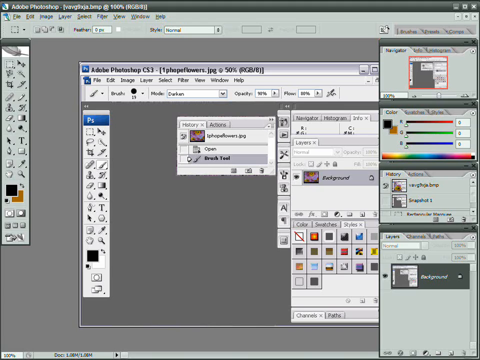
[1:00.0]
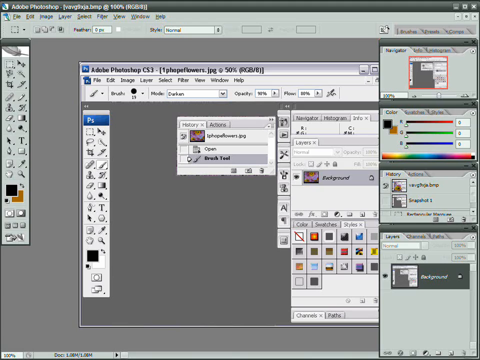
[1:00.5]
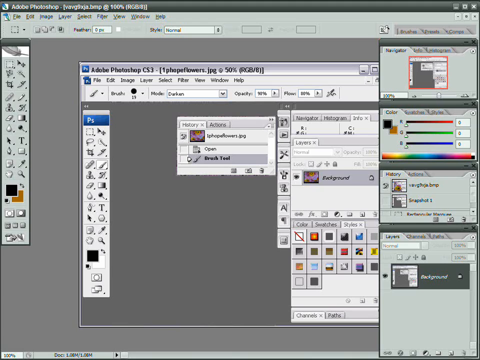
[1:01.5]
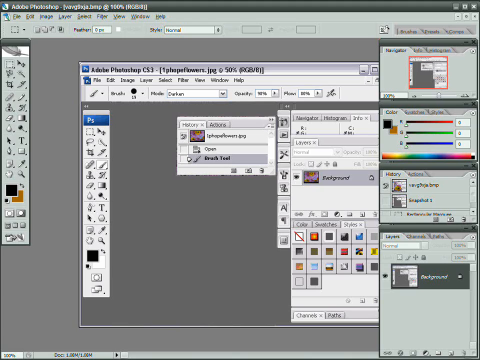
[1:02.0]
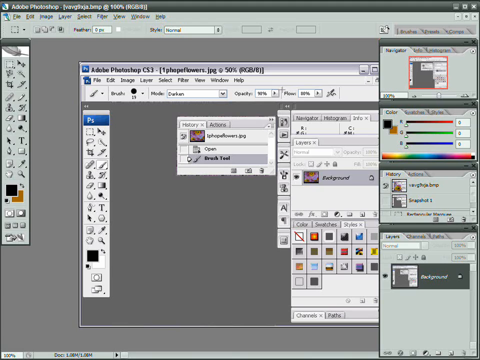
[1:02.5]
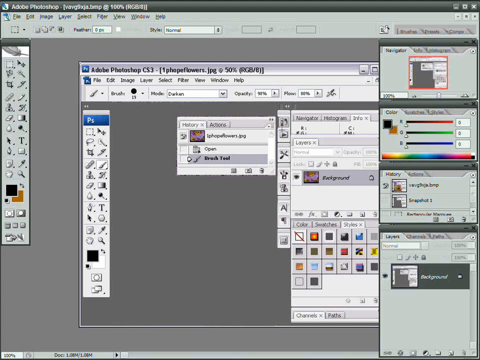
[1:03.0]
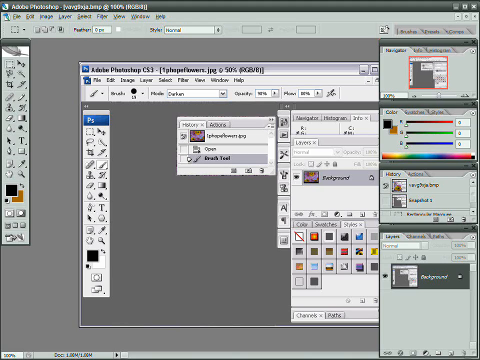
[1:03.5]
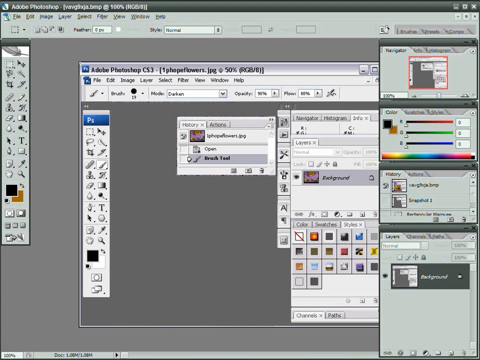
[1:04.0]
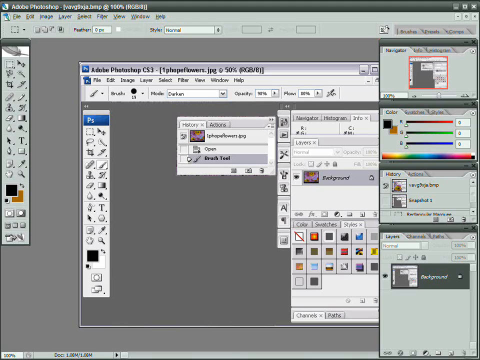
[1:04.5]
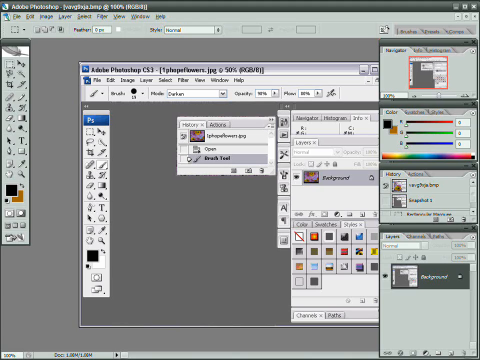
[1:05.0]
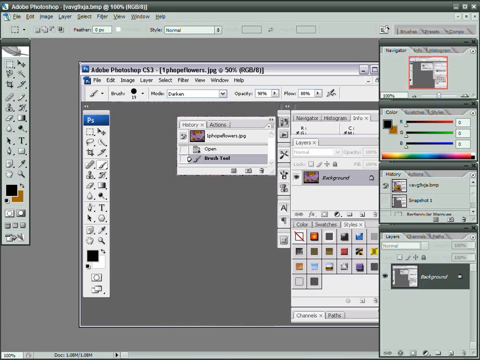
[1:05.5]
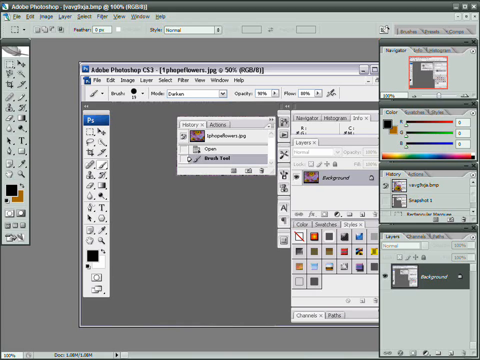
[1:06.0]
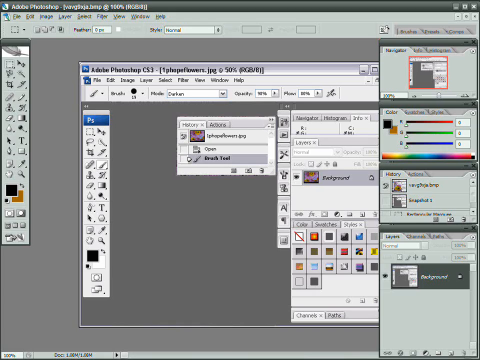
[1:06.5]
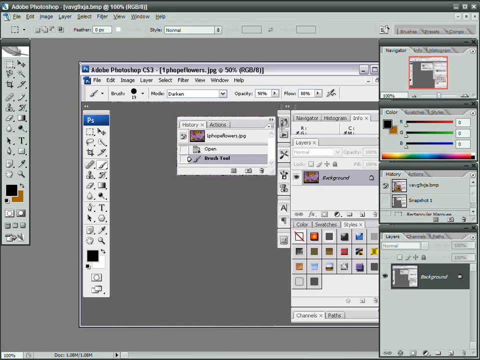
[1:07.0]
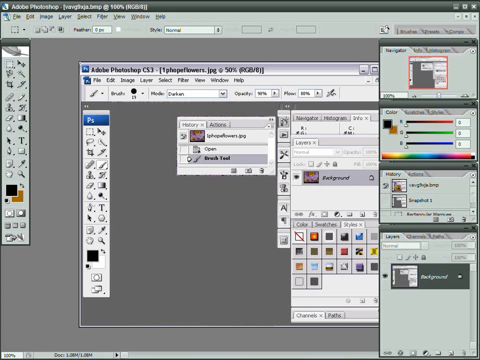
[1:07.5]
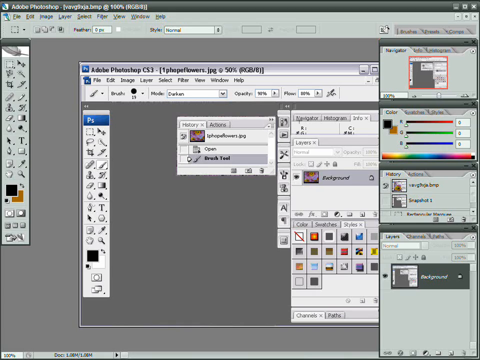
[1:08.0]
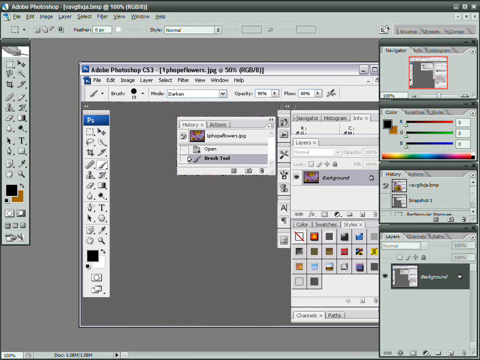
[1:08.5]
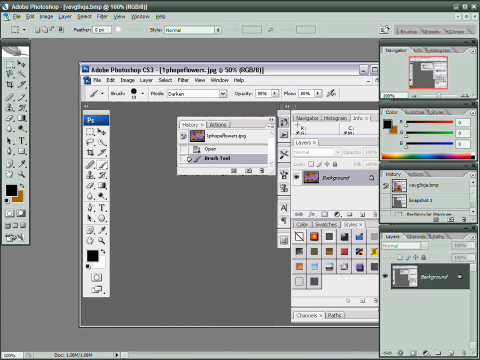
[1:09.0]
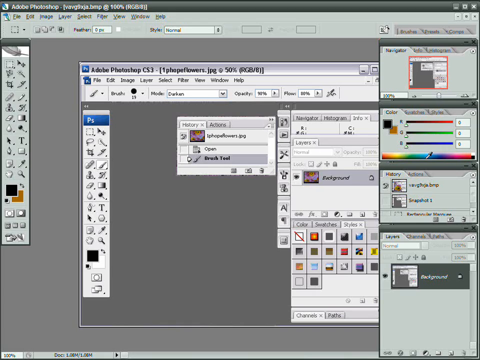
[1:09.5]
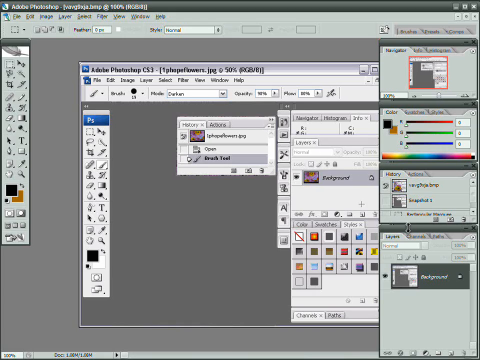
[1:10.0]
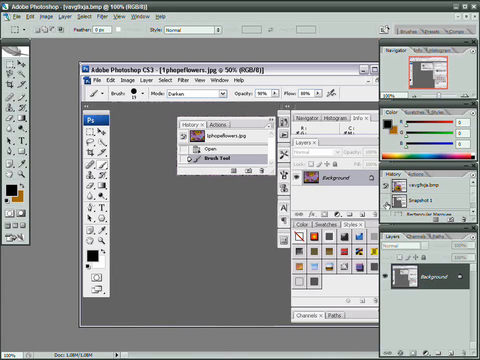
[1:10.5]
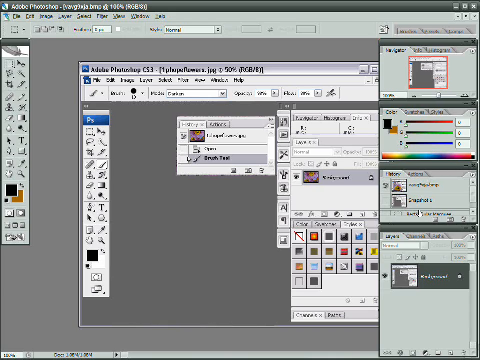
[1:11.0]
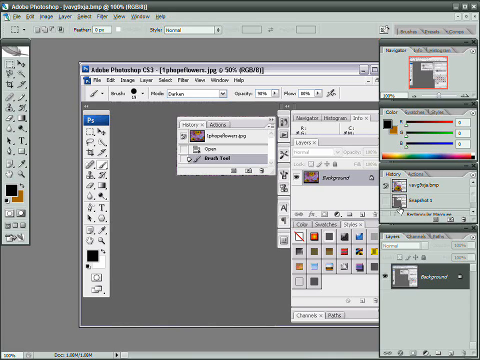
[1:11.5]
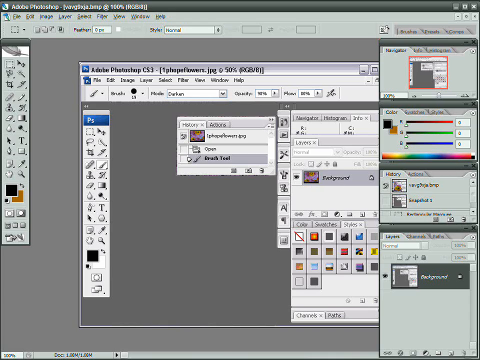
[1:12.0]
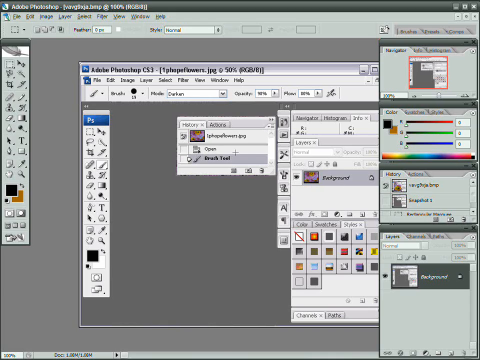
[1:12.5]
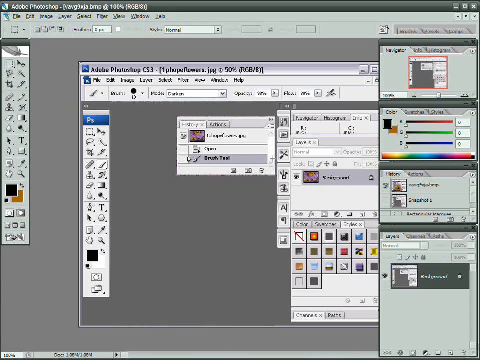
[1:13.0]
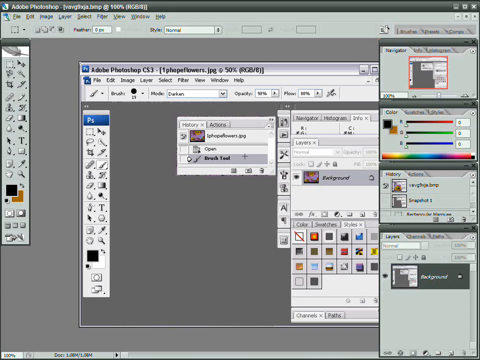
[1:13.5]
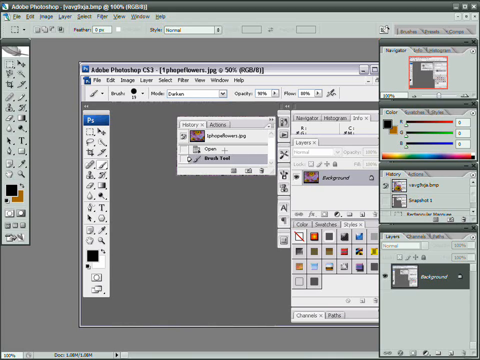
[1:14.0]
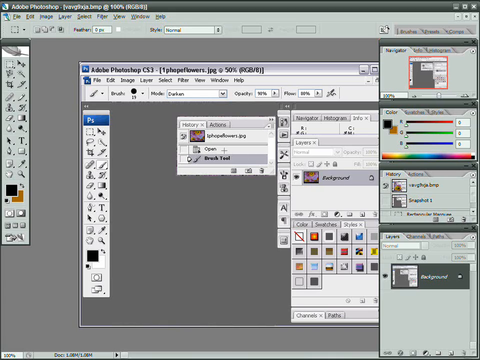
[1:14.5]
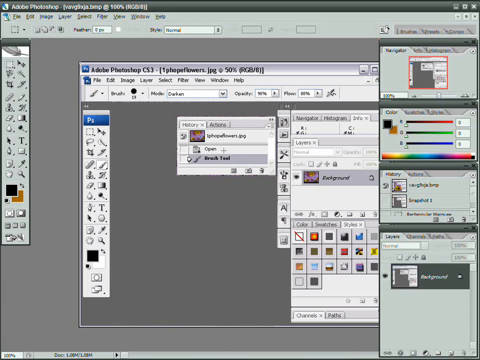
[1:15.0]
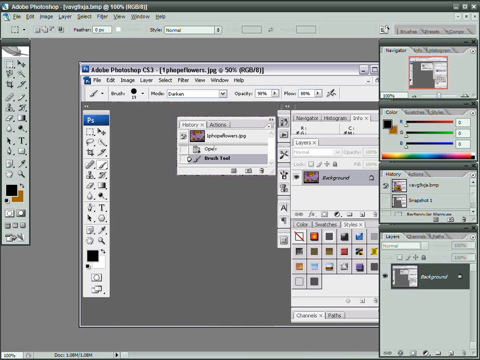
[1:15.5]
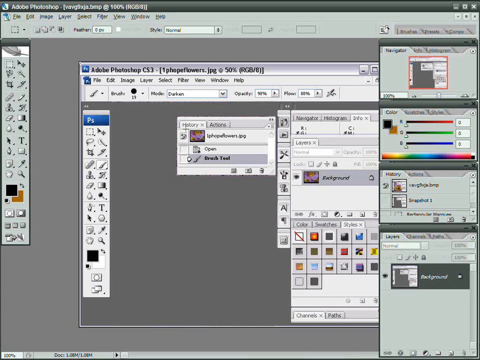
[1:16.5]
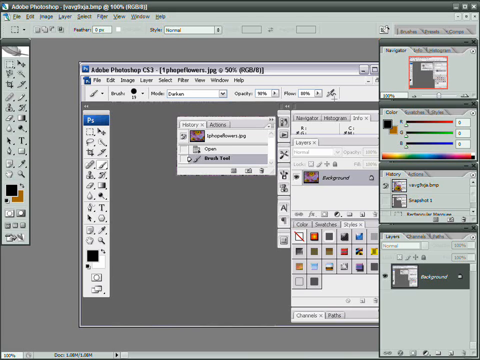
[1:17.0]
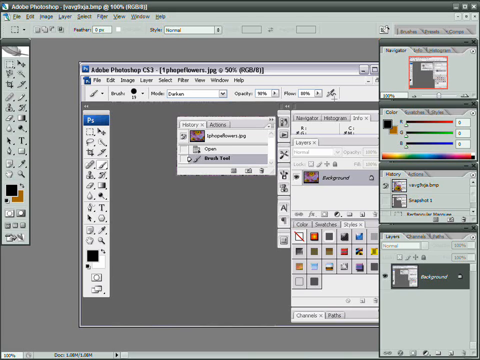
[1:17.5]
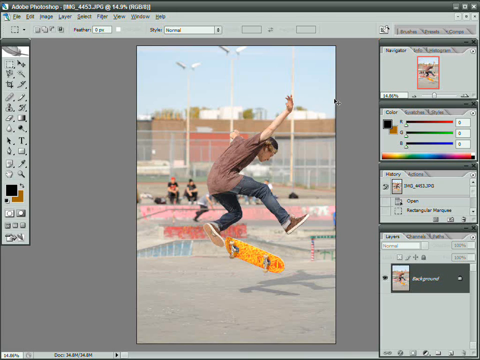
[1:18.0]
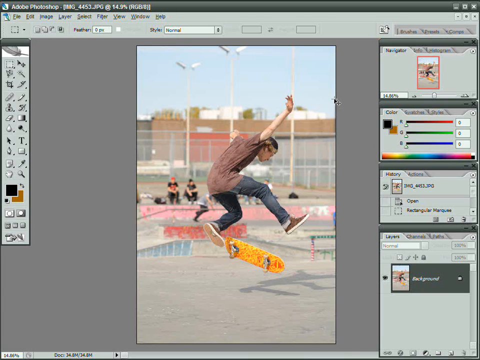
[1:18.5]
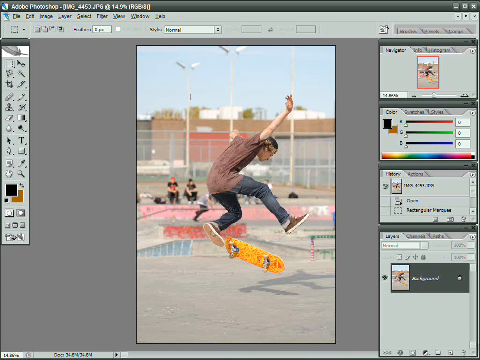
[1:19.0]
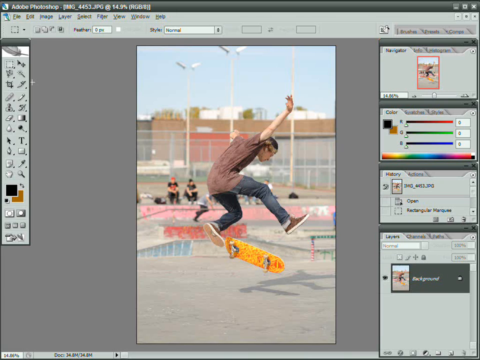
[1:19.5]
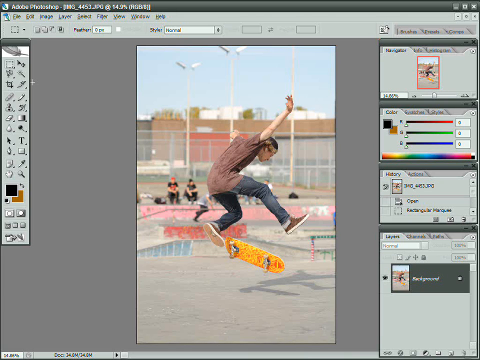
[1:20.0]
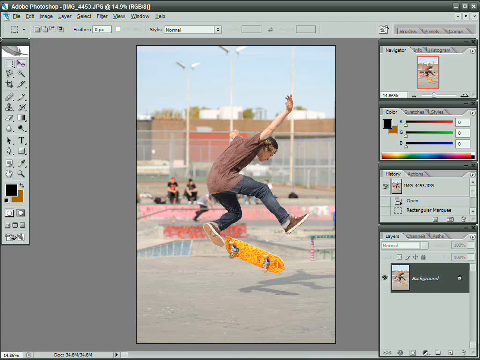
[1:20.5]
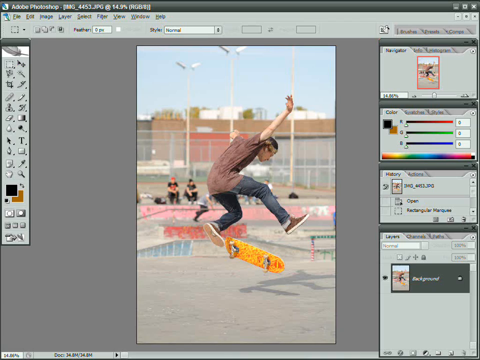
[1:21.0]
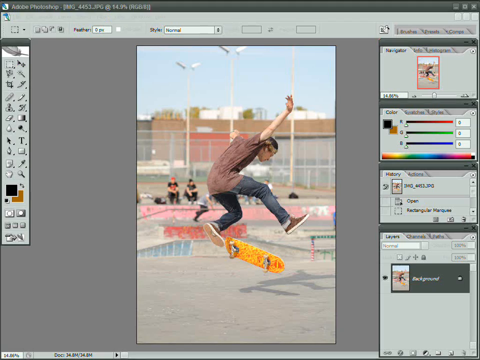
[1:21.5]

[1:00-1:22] The mouse is being used for the brush in the Adobe Photoshop interface. The image has been recreated, with more added to it to make it more appealing to the eye.